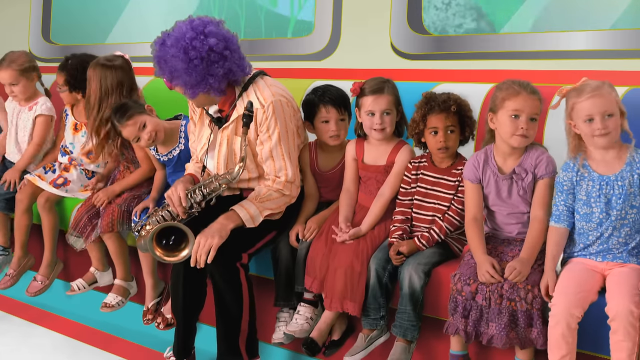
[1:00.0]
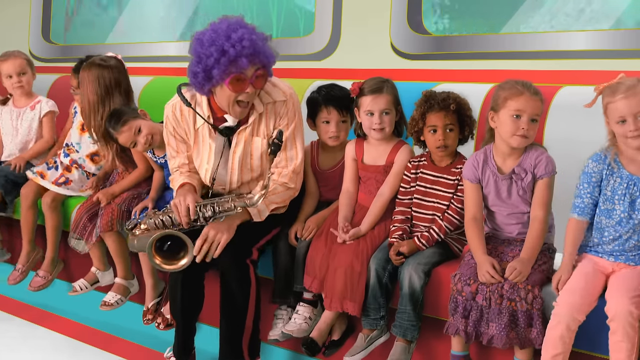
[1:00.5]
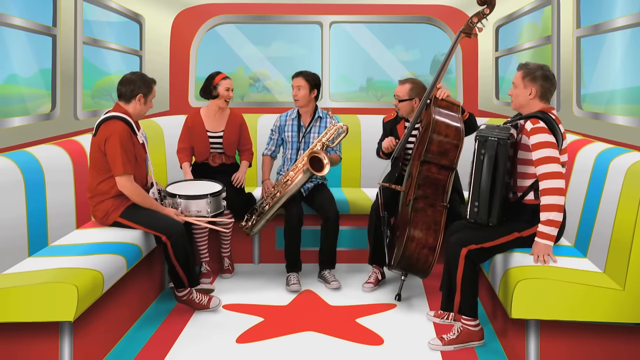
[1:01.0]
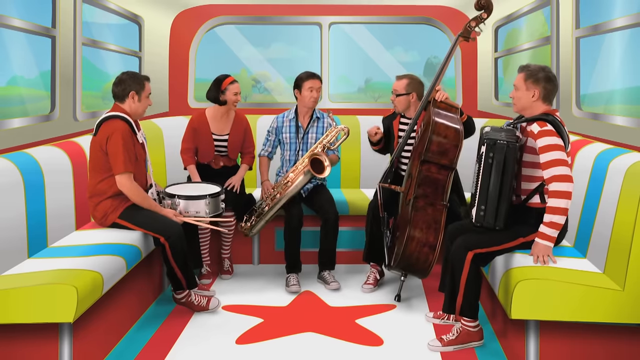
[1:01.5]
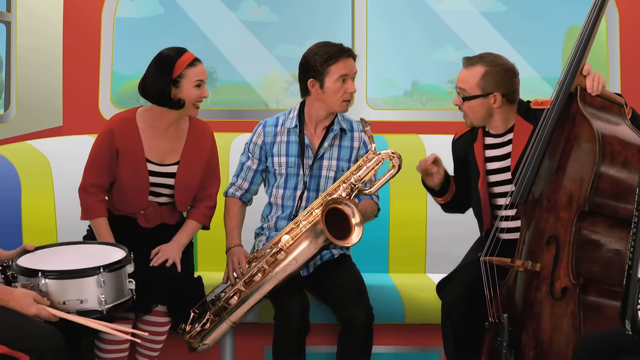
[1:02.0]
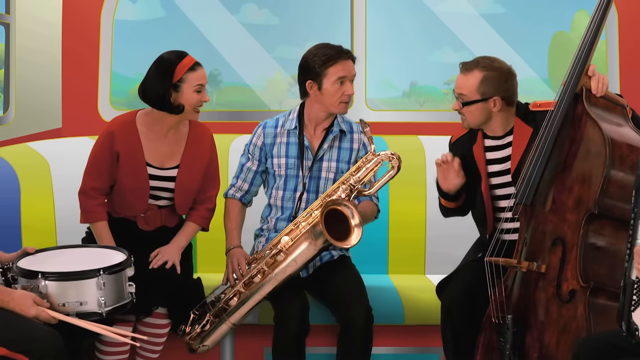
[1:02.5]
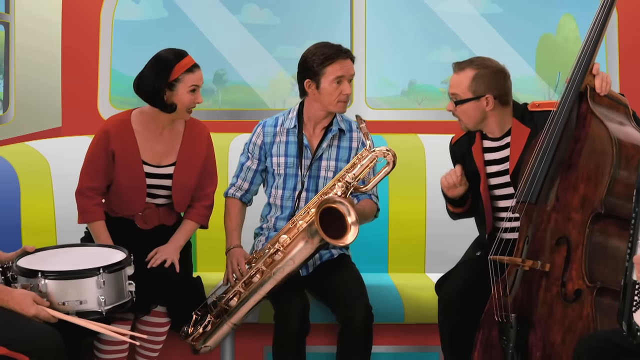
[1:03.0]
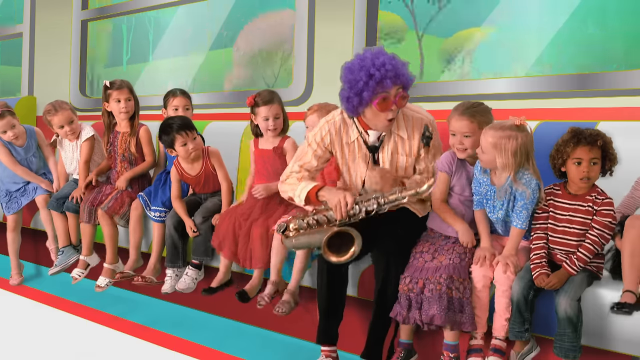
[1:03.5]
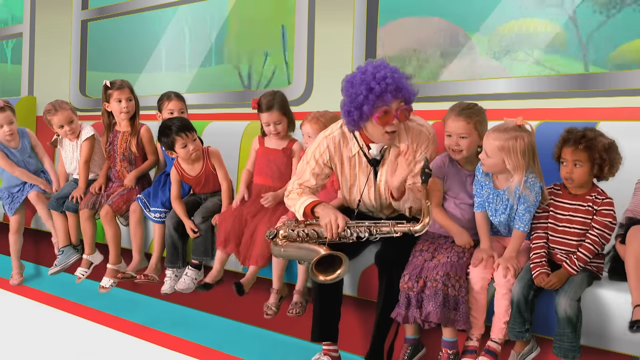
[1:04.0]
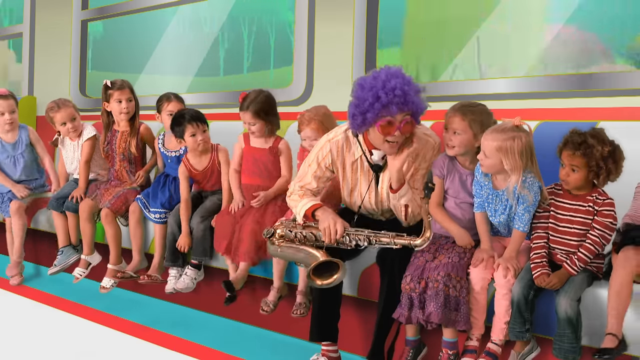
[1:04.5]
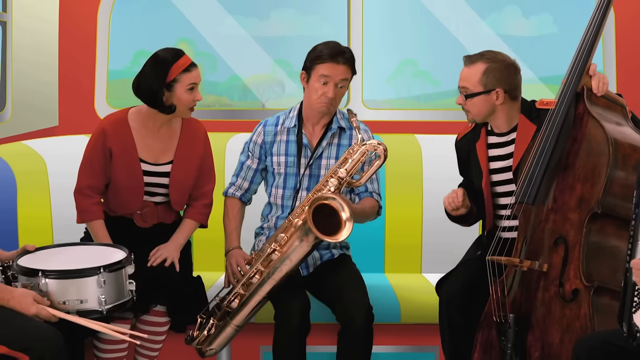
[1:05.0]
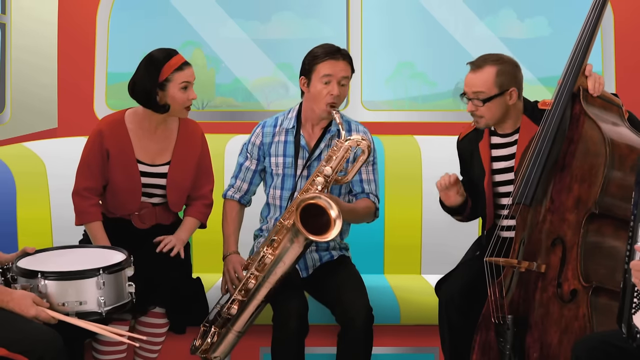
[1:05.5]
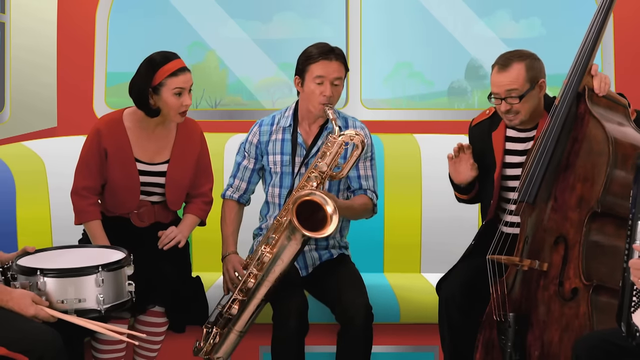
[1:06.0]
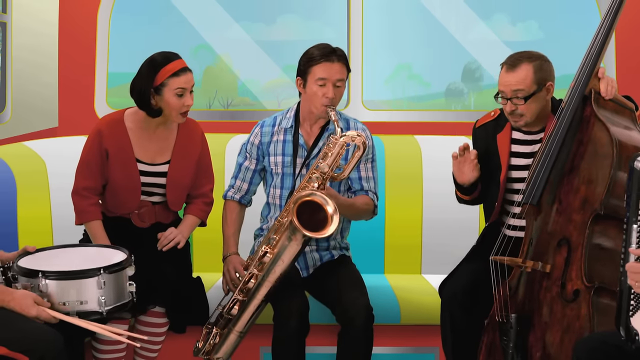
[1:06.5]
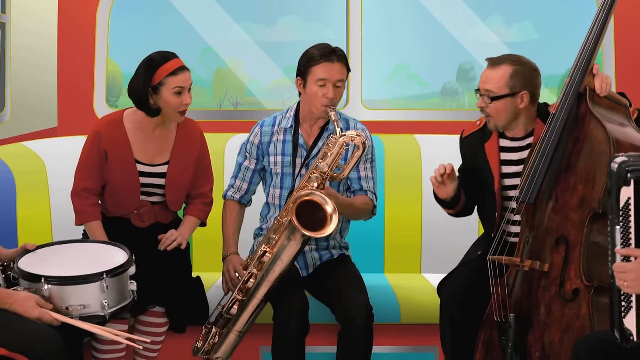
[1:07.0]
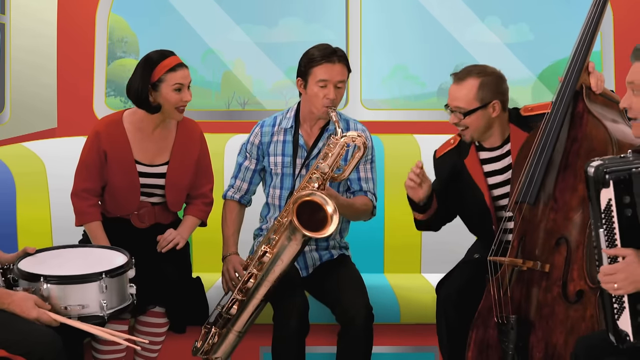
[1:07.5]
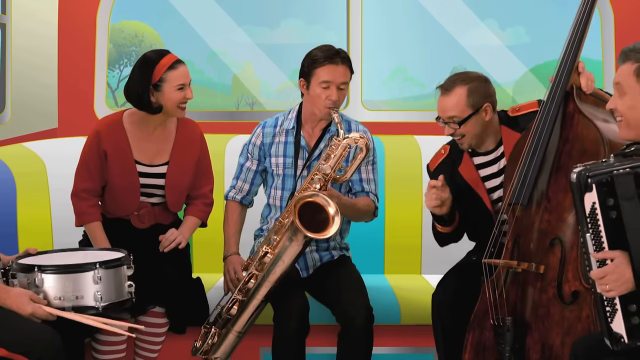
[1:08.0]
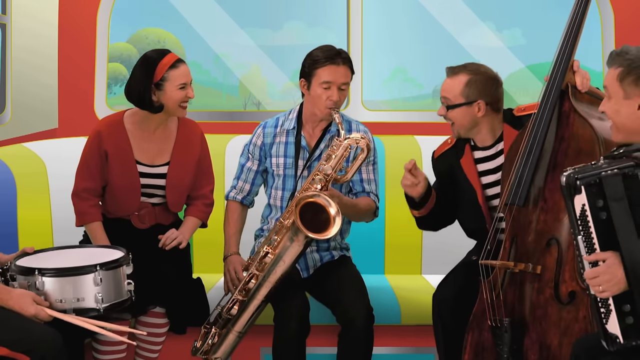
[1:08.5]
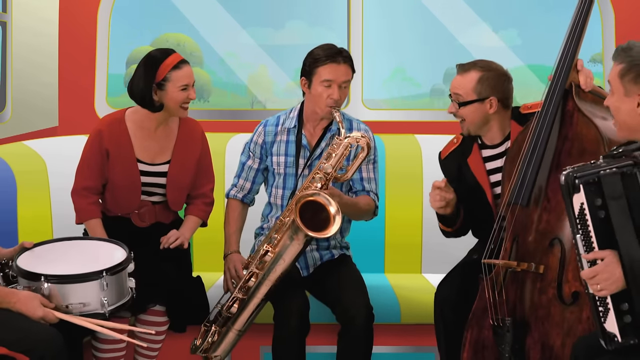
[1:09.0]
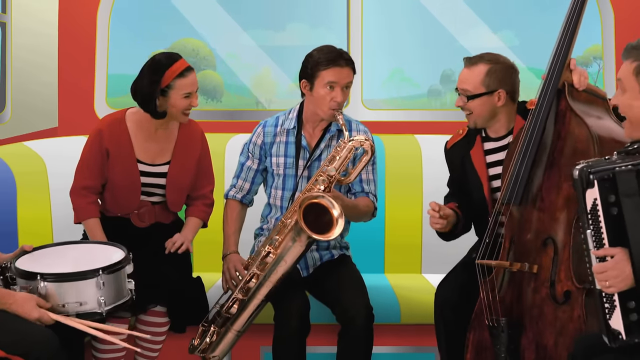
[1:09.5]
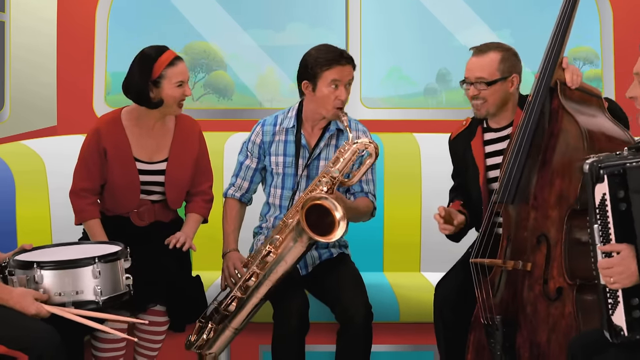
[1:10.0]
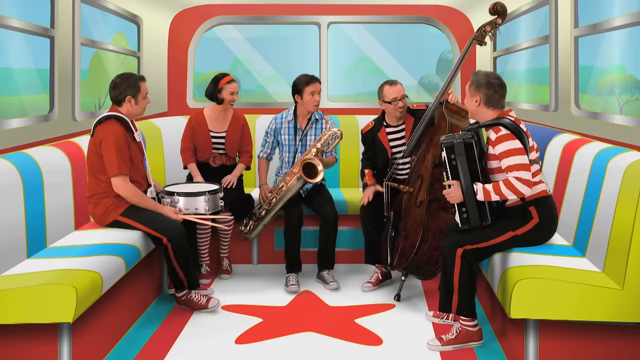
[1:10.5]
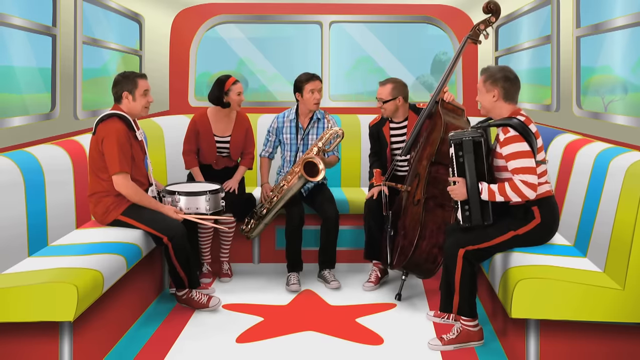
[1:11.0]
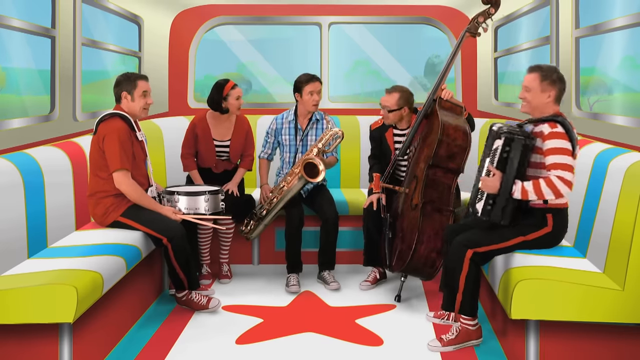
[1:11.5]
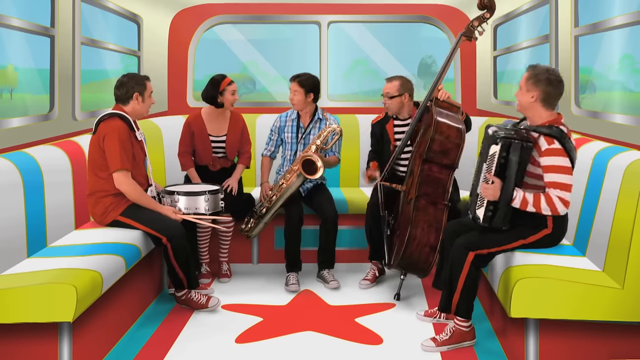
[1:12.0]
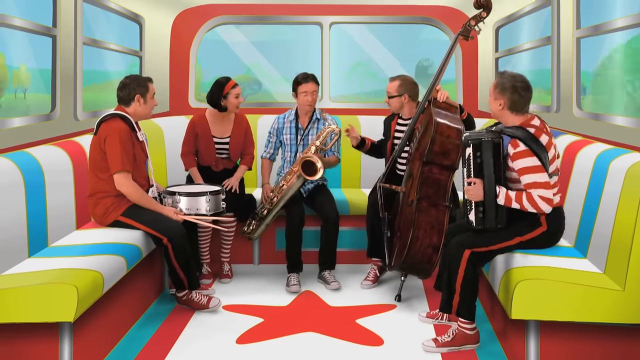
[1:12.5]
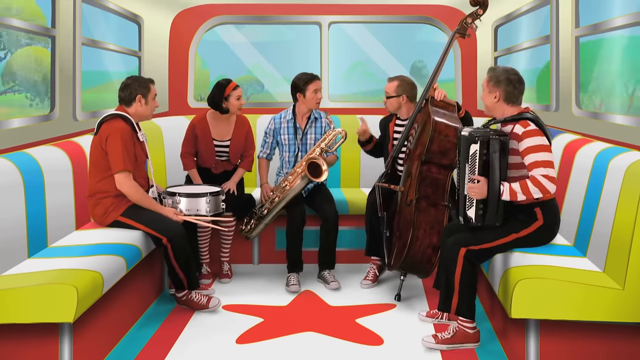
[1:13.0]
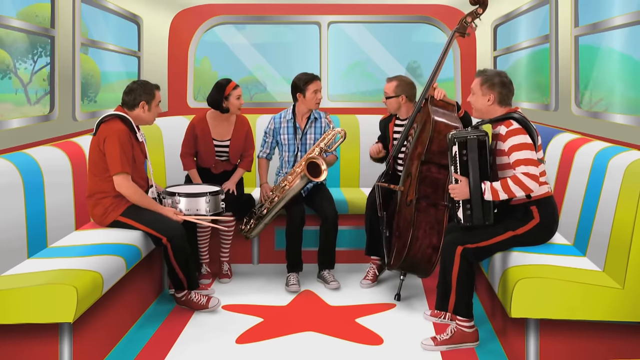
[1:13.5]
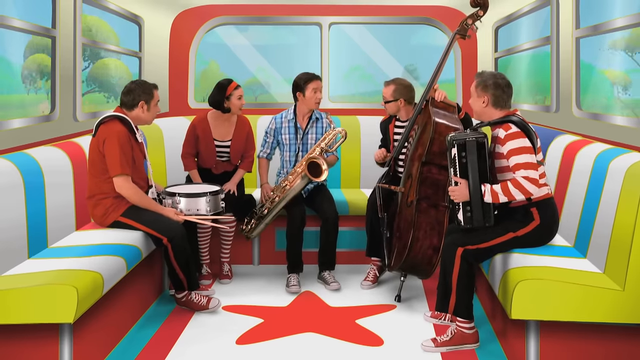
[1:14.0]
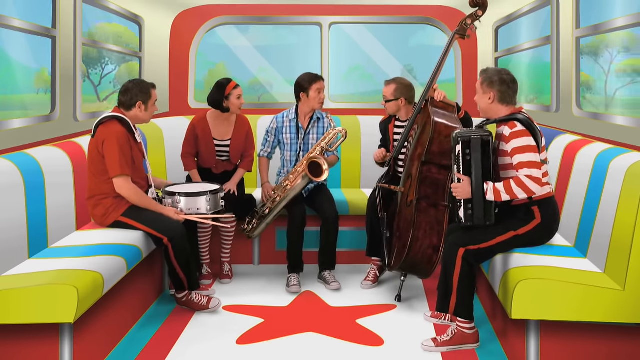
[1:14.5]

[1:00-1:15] The band looks like it wants to start playing music together, but the members are still talking a lot. The saxophone player in the blue shirt appears to get a few notes out, maybe five, and the others listen in, maybe to see how they can join in. The cello or bass player seems to be snapping his fingers and smiling along, and the accordion player looks like he is getting ready to do something. The saxophone player with the children listens in as if trying to understand what is going on. The children watch the people at the back of the bus; they seem a little surprised and unsure what to expect, not upset but not seeming to know what is going on. The band mostly talks rather than plays. The shot keeps cutting to the saxophone player in the back trying to play with the band.